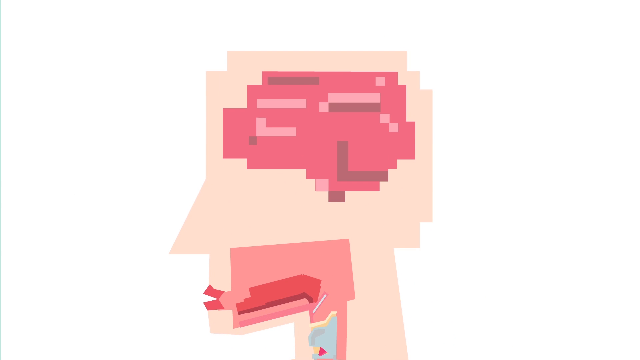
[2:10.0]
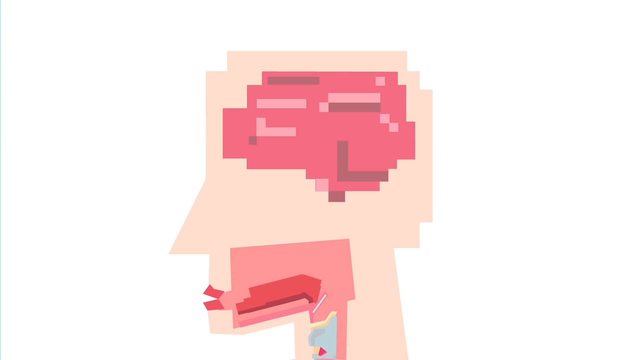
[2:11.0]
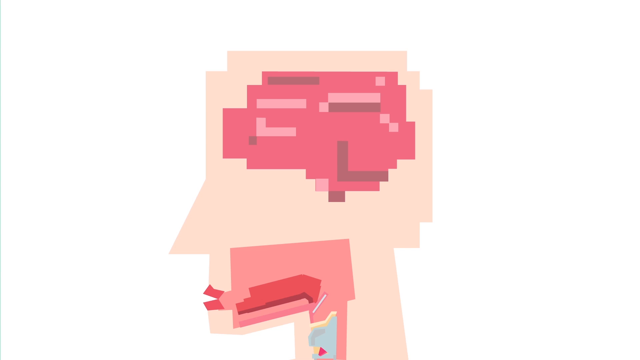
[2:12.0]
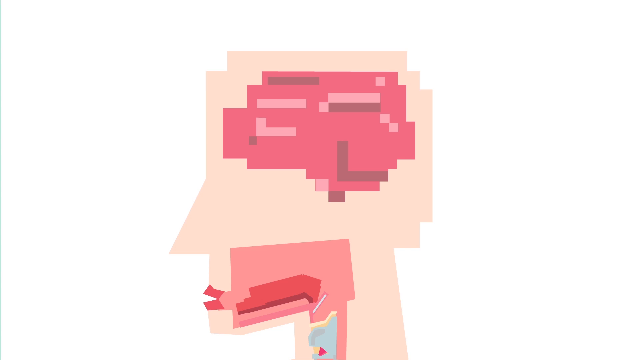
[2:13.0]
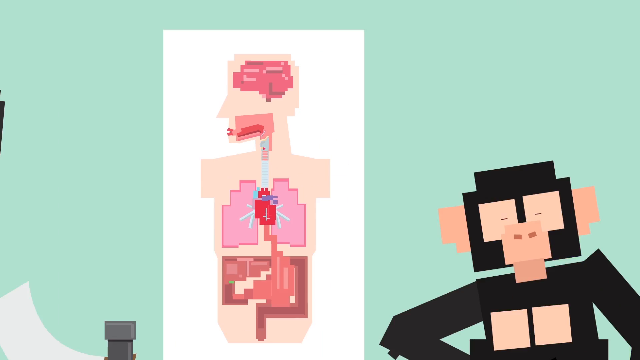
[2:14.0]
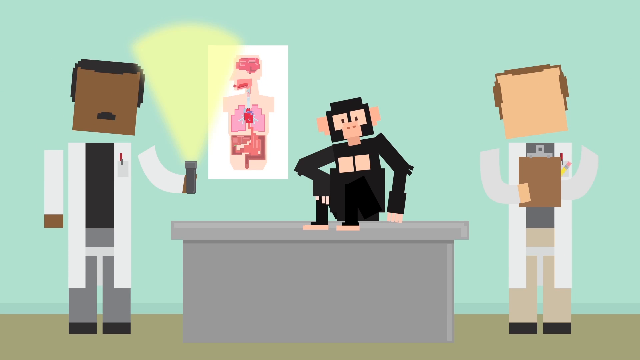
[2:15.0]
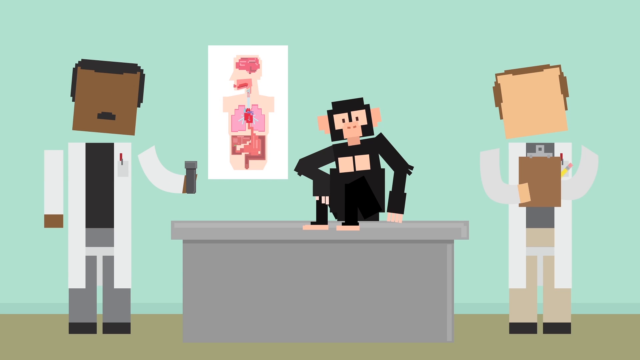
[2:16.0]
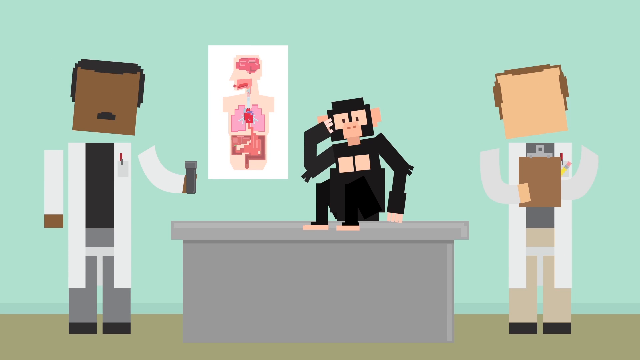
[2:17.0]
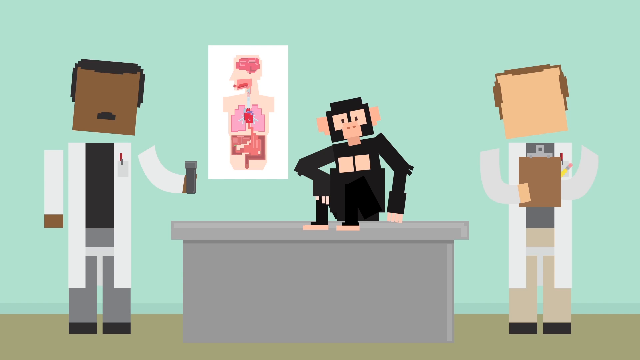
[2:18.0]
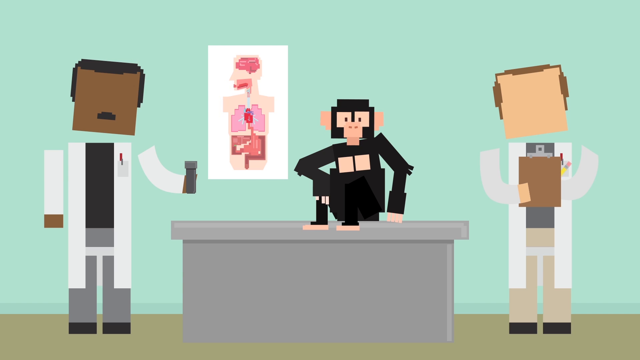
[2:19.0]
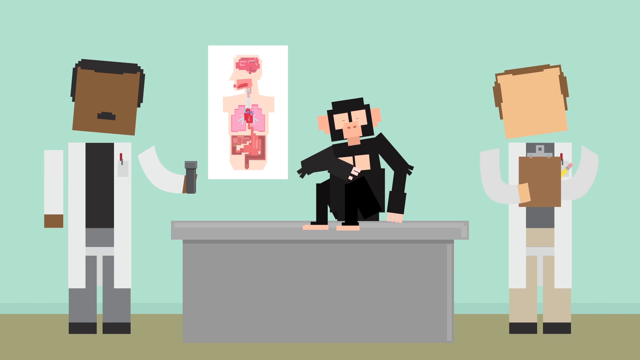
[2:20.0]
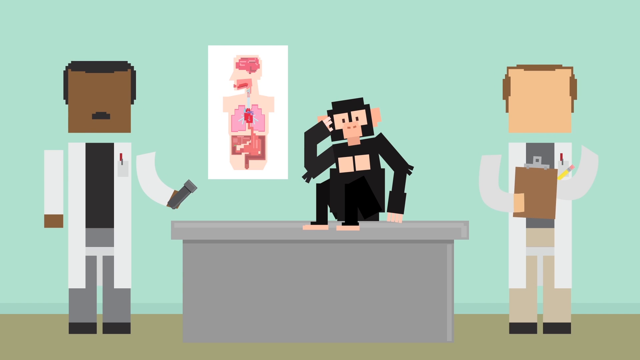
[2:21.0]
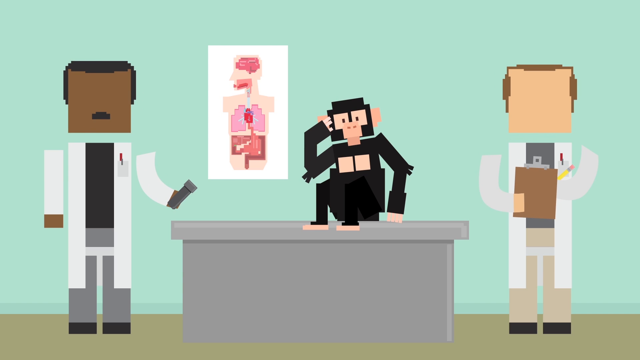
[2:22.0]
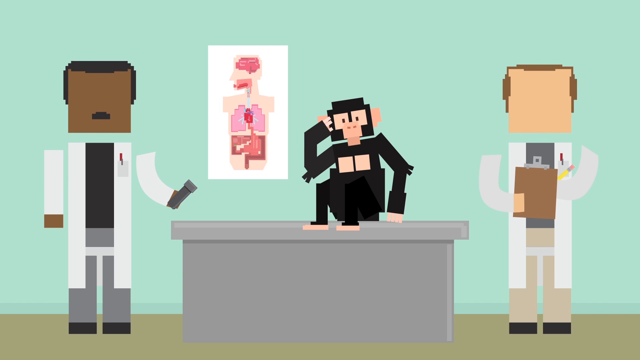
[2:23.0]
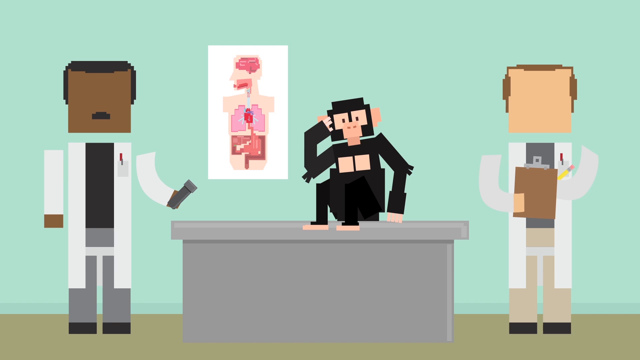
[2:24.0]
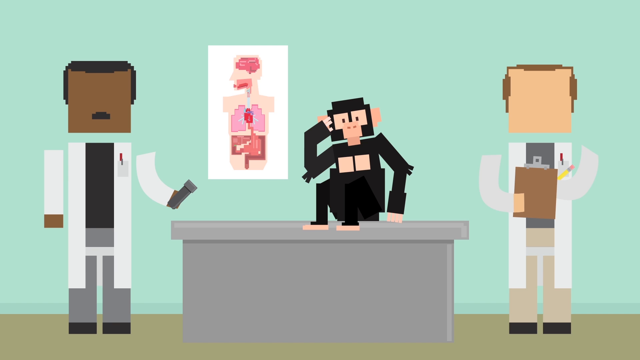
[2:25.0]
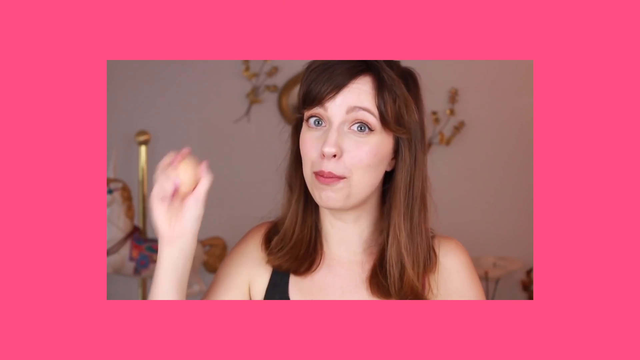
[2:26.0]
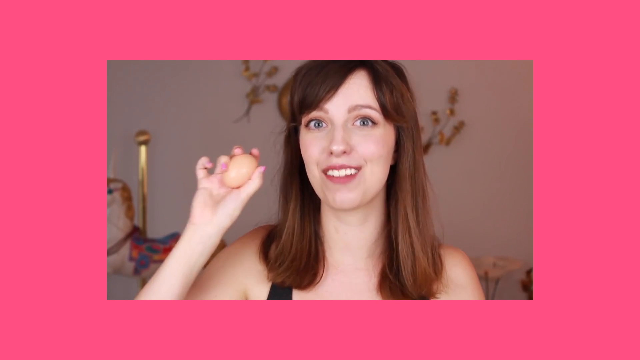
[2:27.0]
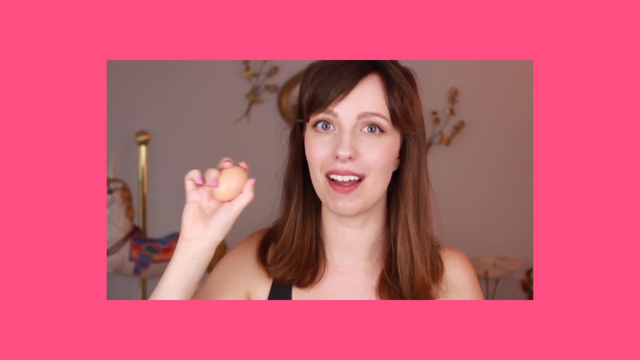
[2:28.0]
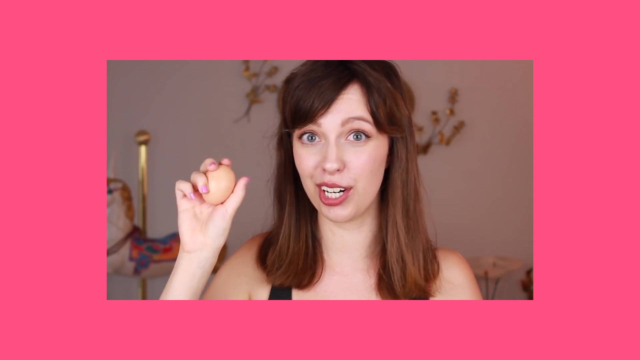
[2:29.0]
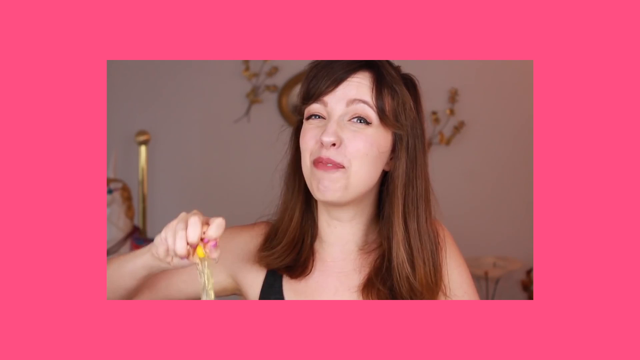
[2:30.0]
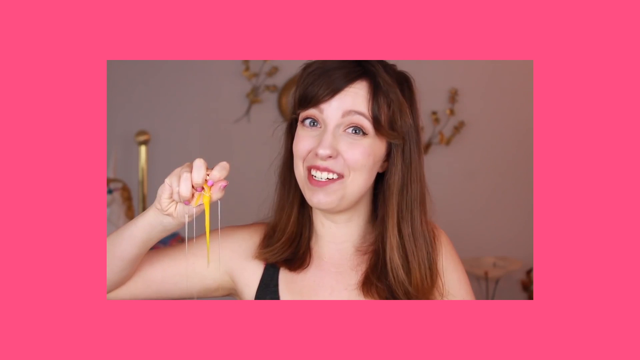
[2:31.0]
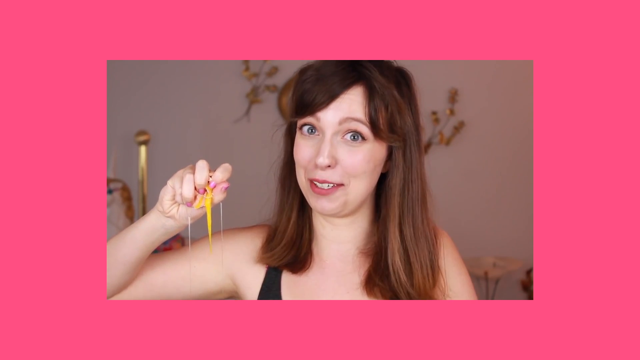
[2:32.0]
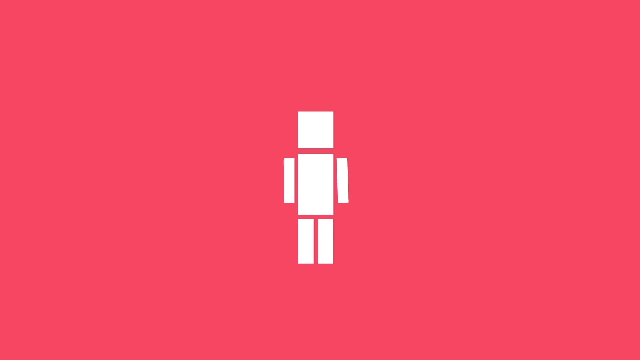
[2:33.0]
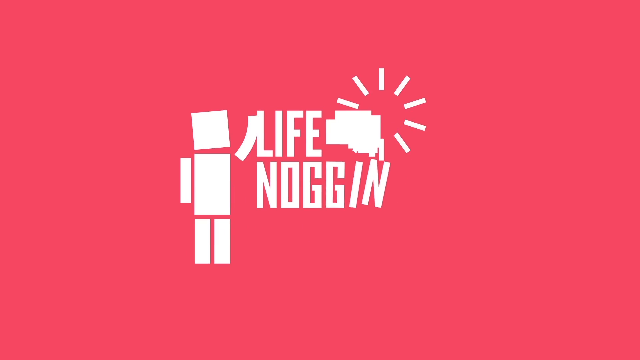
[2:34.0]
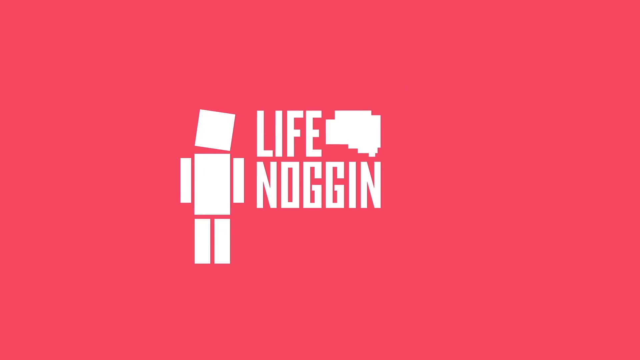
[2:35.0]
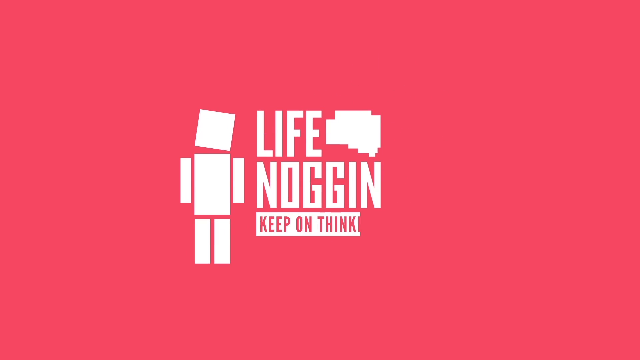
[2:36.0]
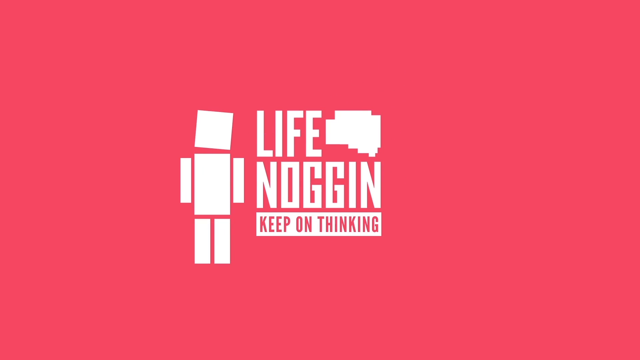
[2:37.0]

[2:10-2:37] From the brain on the poster, the view zooms out to the laboratory office with the two scientists, one on the right with the clipboard and one on the left with the flashlight. The scientist on the left momentarily flashes the flashlight up, turning it on and off. The chimpanzee on the lab table scratches his head. A multicolored vertical stripe white transition again wipes across from the right side of the screen to a new scene: an inset non-cartoon video of a real person, bordered by the same reddish-pink background. A young white woman with brown hair, wearing lipstick, appears to hold up an egg in her right hand; her mouth is partially open and she is smiling while commenting on something. She suddenly squeezes the egg hard with her right hand, breaking it, and the yellow yolk drips out along with the egg whites. Next, the blockhead character is alone on the flat pinkish-red background, standing in the center of the screen, and waves with his left arm. He slides over to the left of the screen, slightly off-center, and the words "Life Noggin" come into place in the center with a pixelated block brain icon right next to the word "life" and above "noggin". Rays like sun rays emanate from the brain in all directions and then quickly disappear. Subtext wipes in below the word "noggin", reading "keep on thinking".